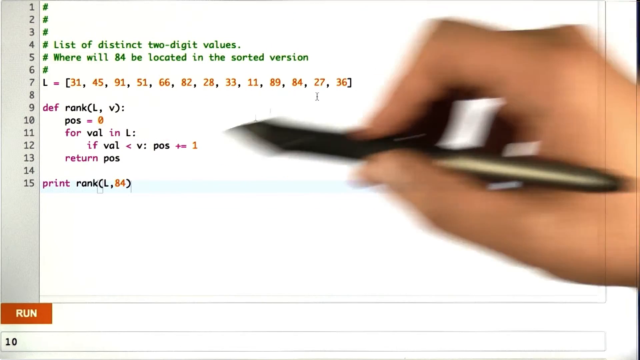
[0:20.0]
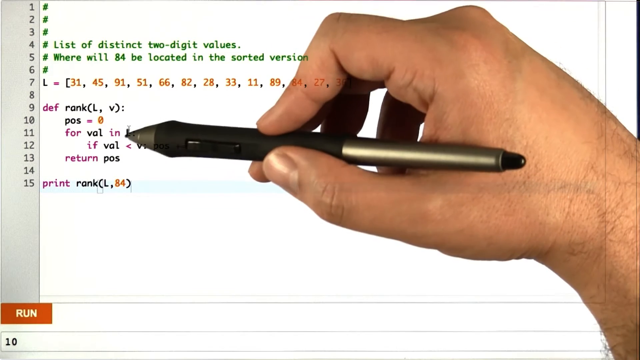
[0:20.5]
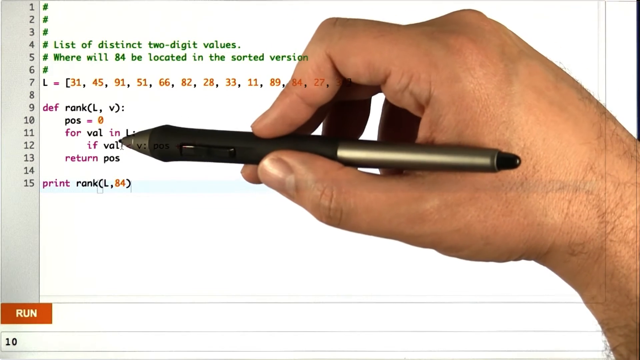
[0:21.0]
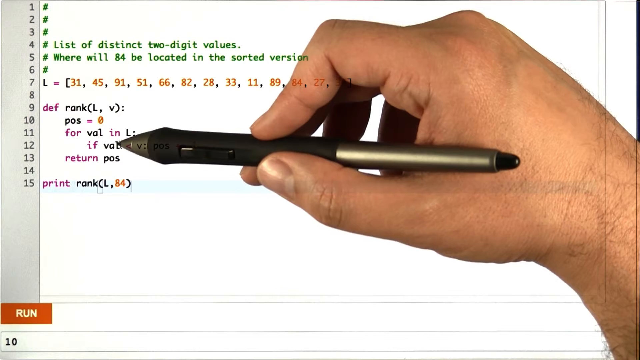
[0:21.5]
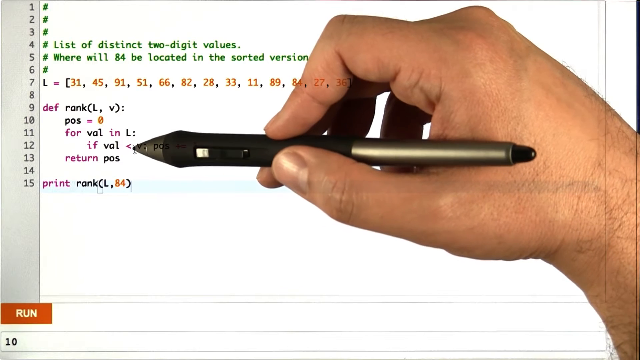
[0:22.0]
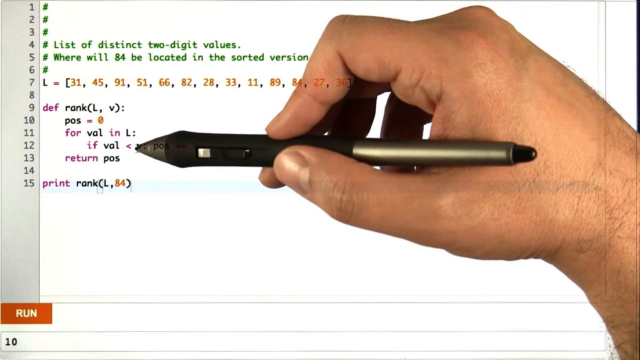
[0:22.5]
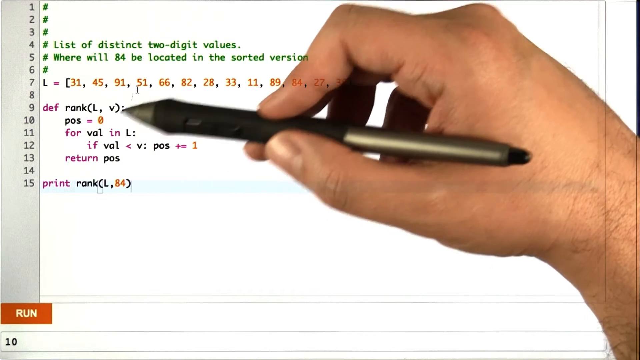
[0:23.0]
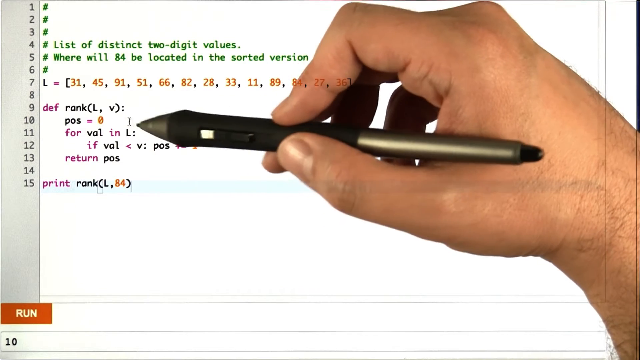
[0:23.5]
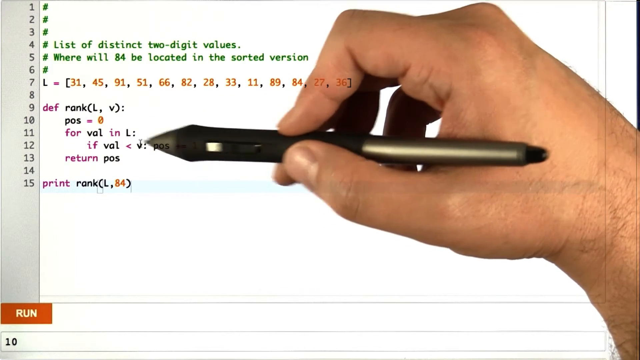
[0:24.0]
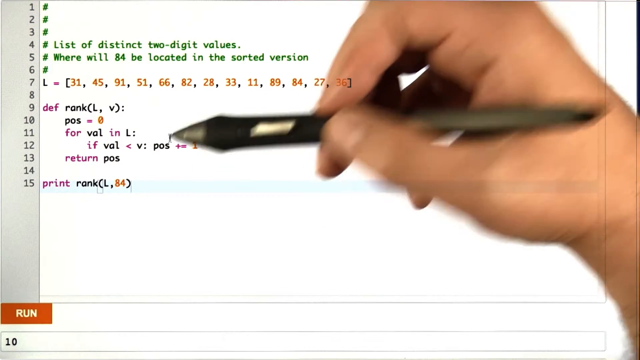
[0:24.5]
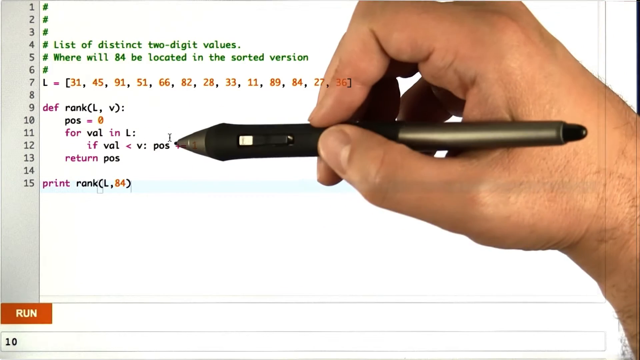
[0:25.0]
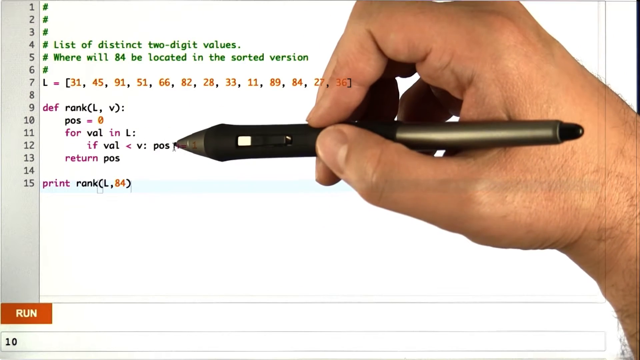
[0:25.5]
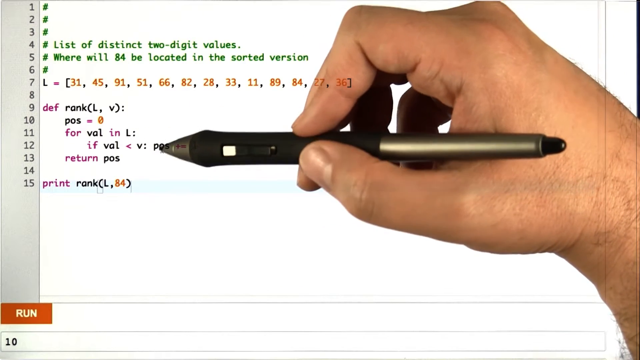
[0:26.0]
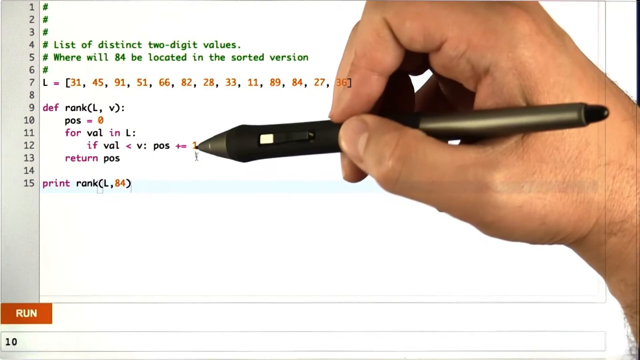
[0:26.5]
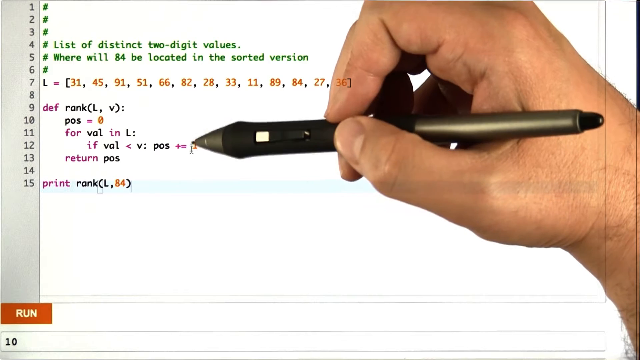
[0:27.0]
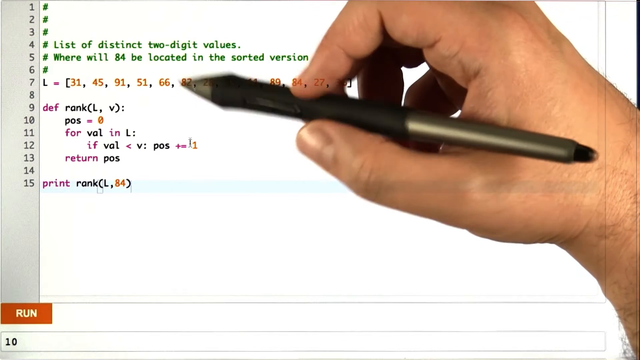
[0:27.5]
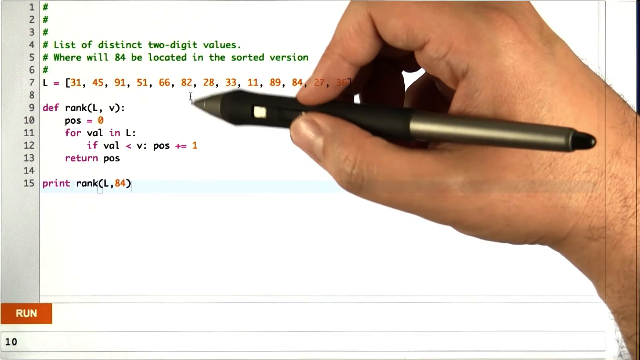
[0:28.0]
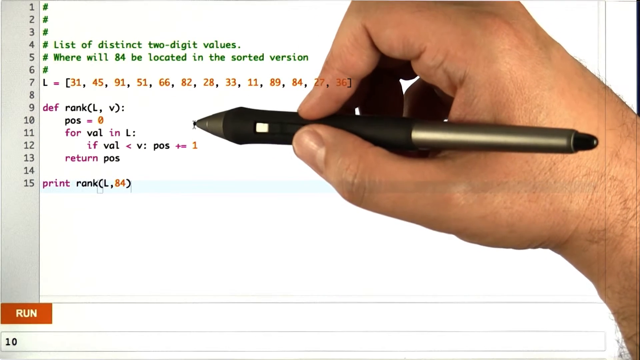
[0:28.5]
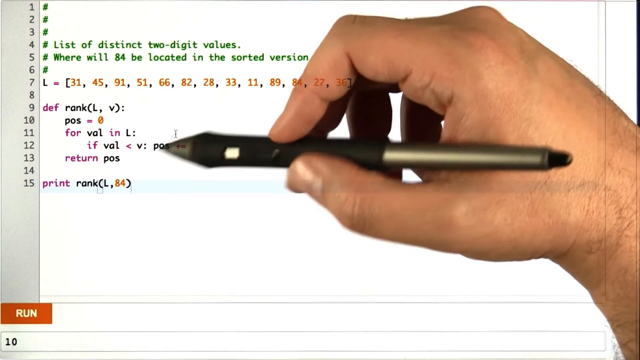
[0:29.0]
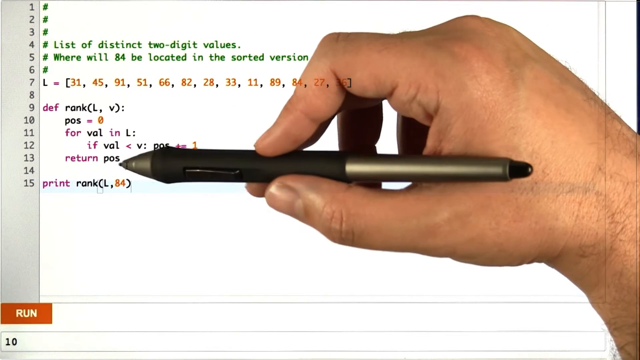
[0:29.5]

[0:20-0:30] A page full of code is on the screen, with a hand on the right side holding a pen that points to the code. The first six lines begin with number signs, marking them as comments. Line 4 reads "list of distinctive values" and line 5 reads "where will 84 be located in the sorted version". Line 7 reads L equals, in brackets, 31, 45, 91, 51, 66, 82, 28, 33, 11, 89, 84, 27, 36. Line 9 reads "def rank" followed by L comma V in brackets and a colon. Line 10 reads "POS = 0", line 11 reads "for val in L:", line 12 reads "if val < V: POS += 1", line 13 reads "return POS", and line 15 reads "print rank" followed by L comma 84 in brackets. The hand moves over line 12, then to line 9, then back to line 12, seemingly pointing at the code and giving instructions about it.